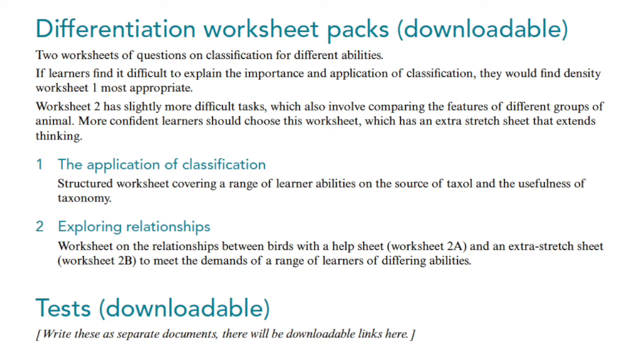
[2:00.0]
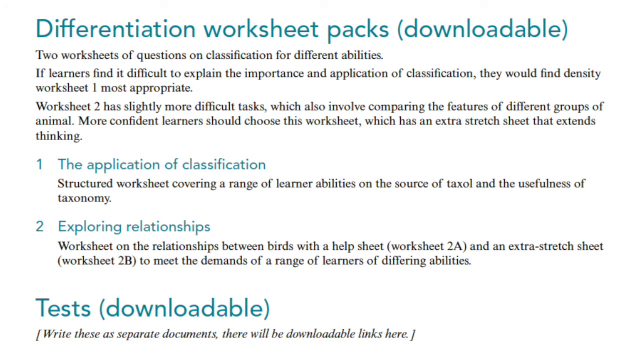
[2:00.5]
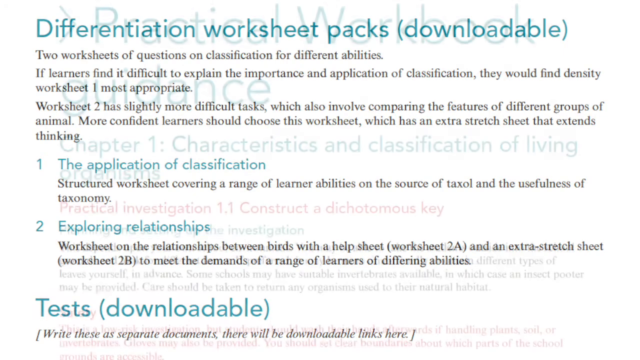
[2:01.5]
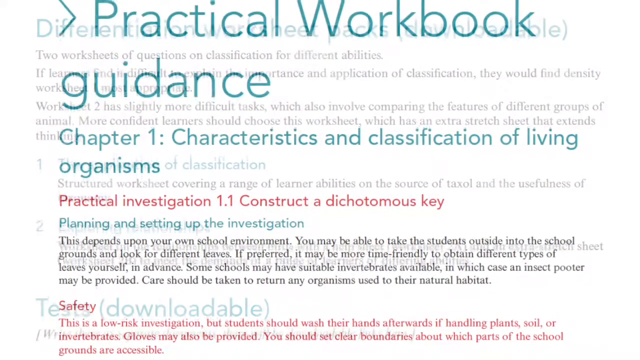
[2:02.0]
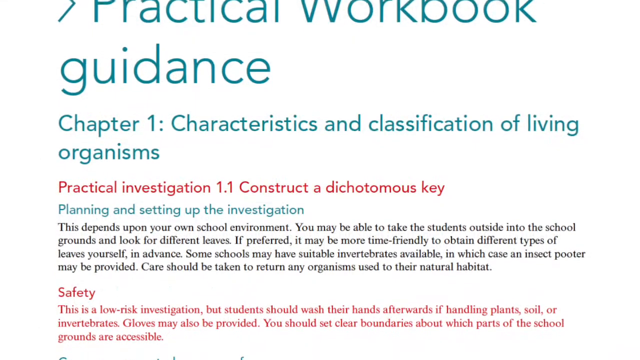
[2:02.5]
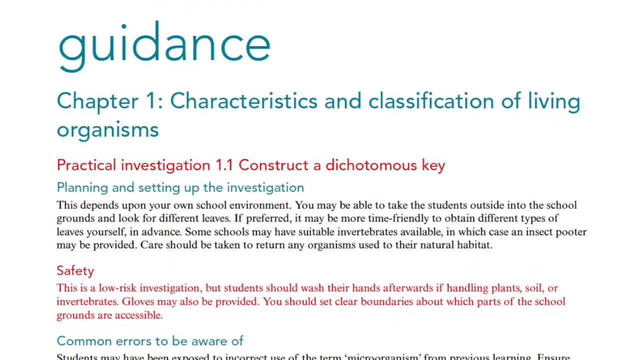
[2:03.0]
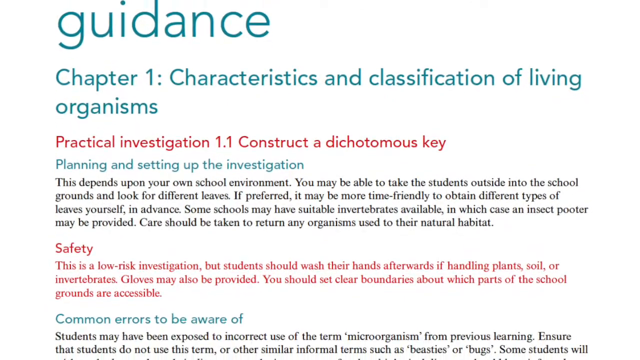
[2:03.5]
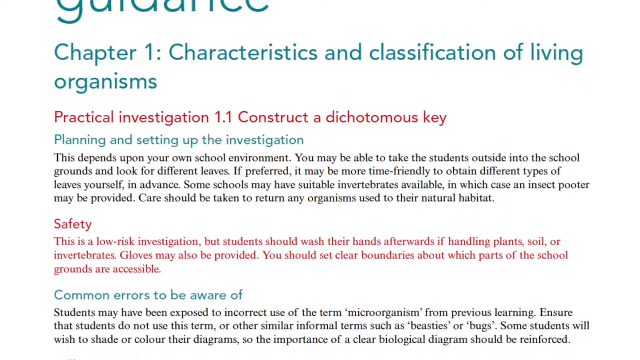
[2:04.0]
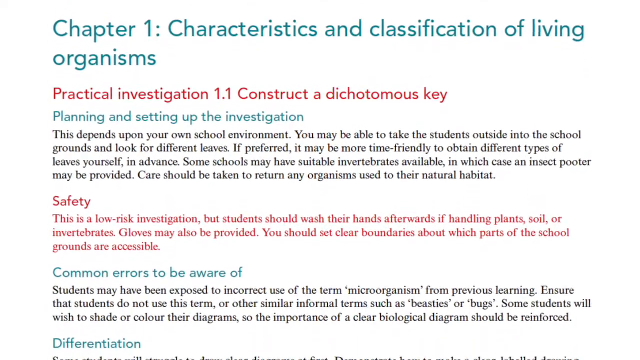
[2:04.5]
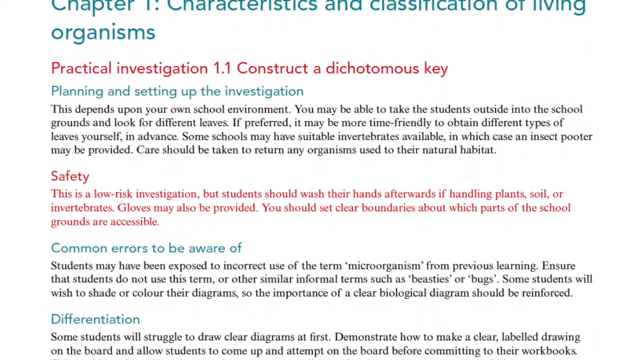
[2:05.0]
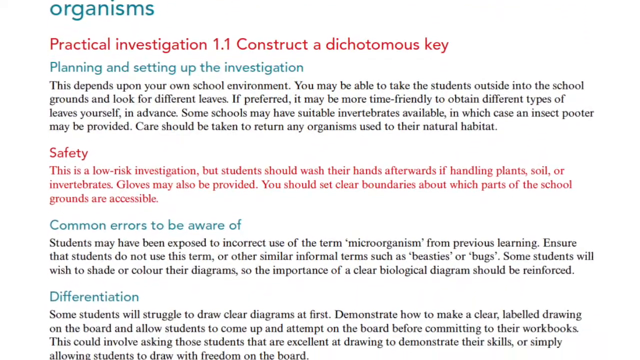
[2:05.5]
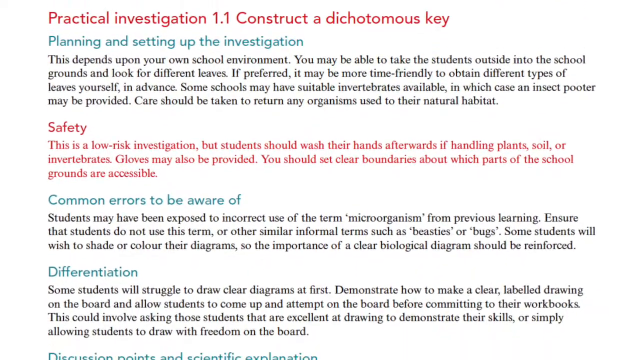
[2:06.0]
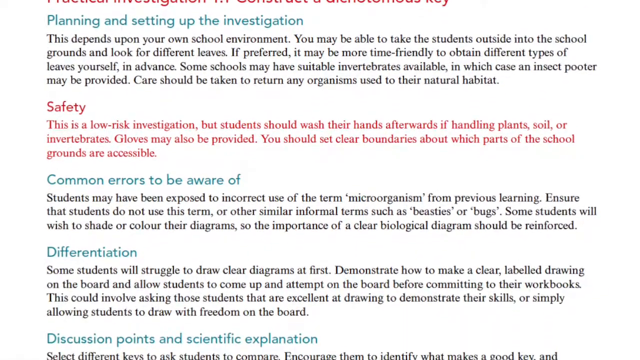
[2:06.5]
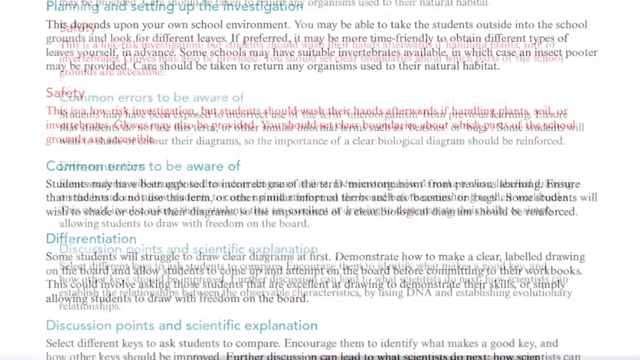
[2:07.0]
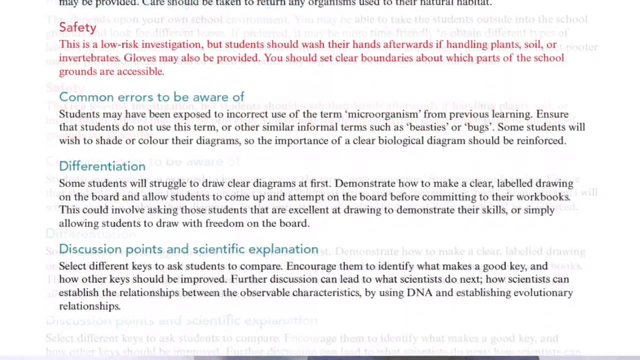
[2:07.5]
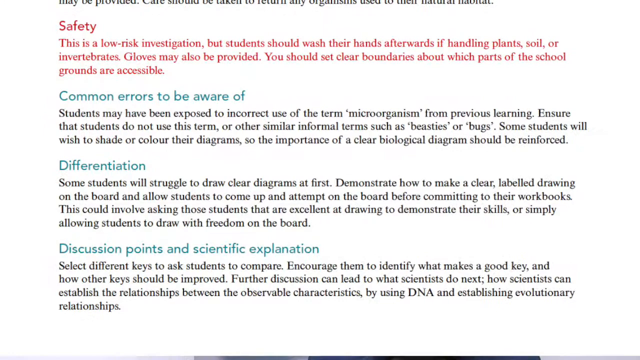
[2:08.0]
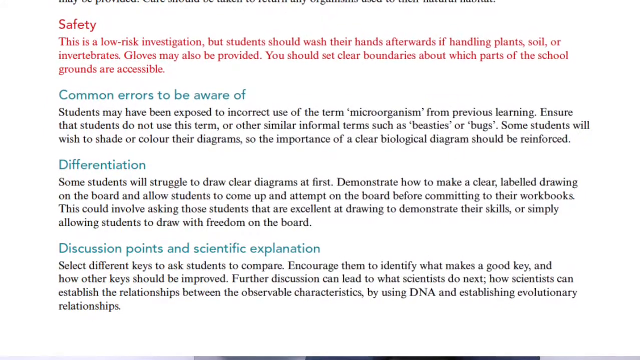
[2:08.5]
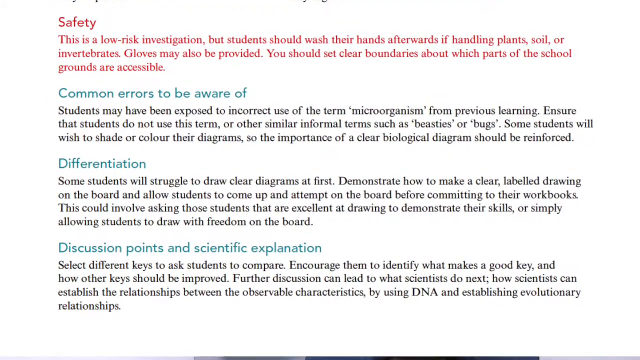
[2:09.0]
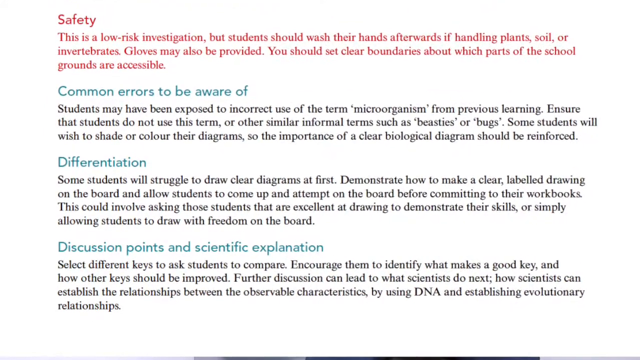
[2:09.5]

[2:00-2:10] A page has the words "differentiation worksheets pack" at the top, with "(downloadable)" in brackets. Beneath are the words "two worksheets of questions on classification for different abilities. If learners find it difficult to explain the importance and application of classification, they would find" followed by further text, including "Worksheet two has slightly more difficult tasks, which also involve comparing the features of different groups of animals. More confident learners should choose this worksheet, which has an extra stretch sheet that extends thinking." Two numbered items follow: "1. The application of classification, structured worksheet covering a range of learner abilities on the source of taxol and the usefulness of taxonomy" and "2. Exploring relationships, worksheet on the relationship between birds with a help sheet, worksheet 2A, and an extra stretch sheet, worksheet 2B, to meet the demands of a range of learners of different abilities." Underneath is the word "downloadable." Lots of text then scrolls down, with information about practical investigations and safety.